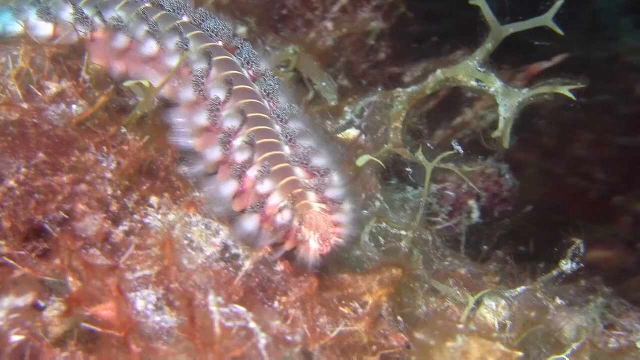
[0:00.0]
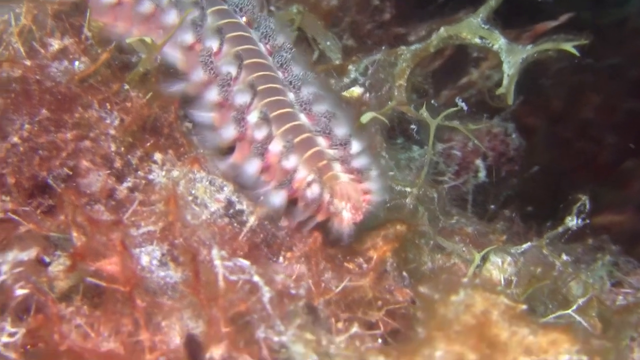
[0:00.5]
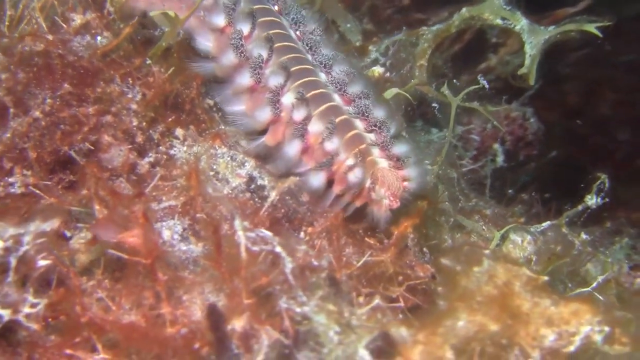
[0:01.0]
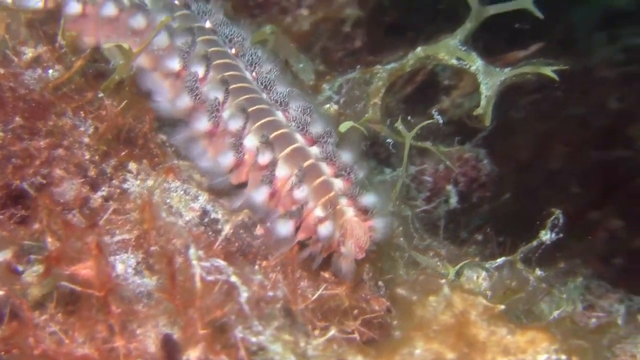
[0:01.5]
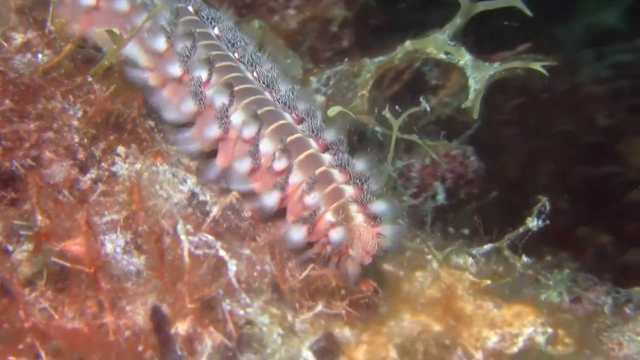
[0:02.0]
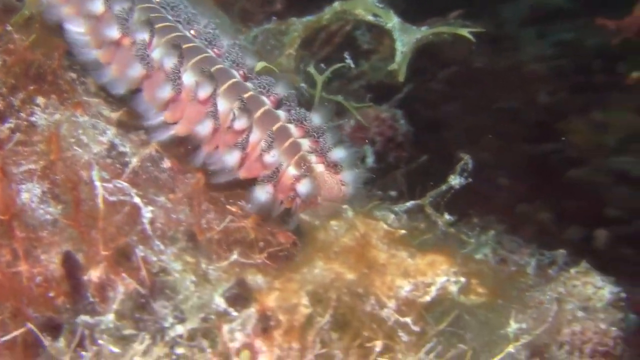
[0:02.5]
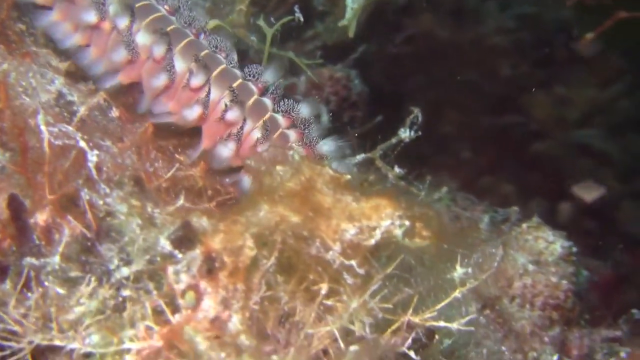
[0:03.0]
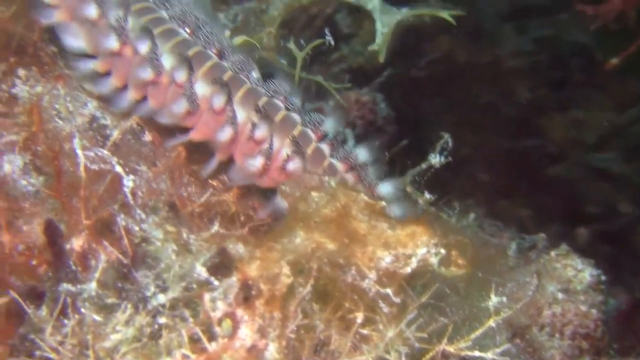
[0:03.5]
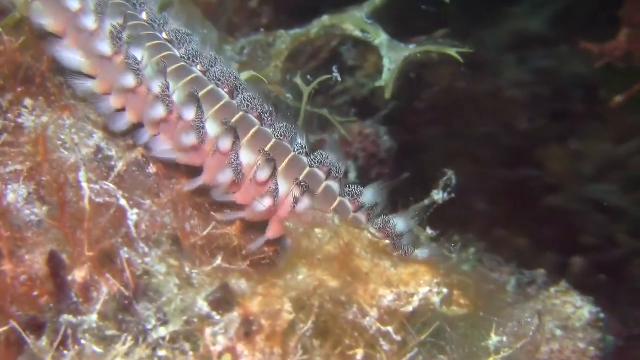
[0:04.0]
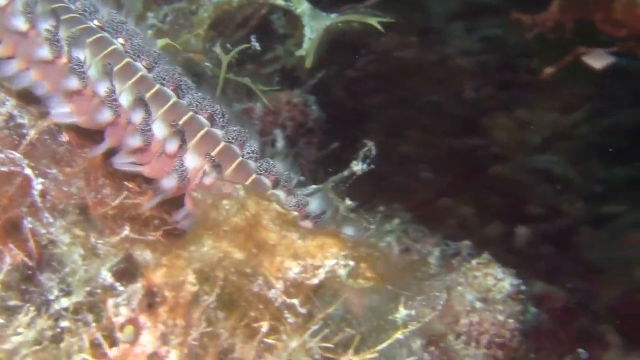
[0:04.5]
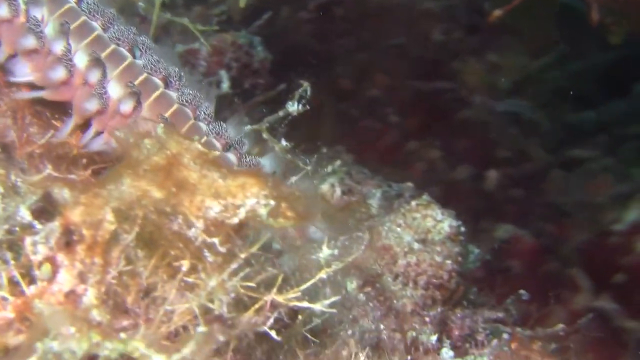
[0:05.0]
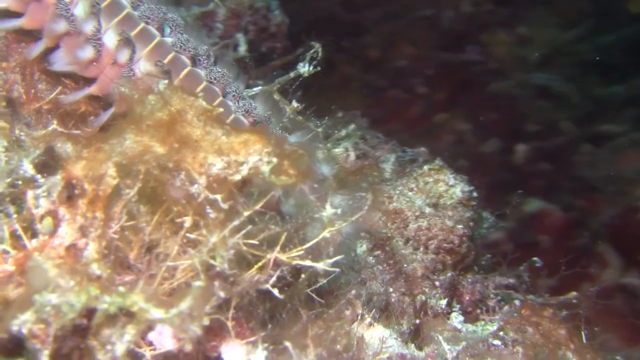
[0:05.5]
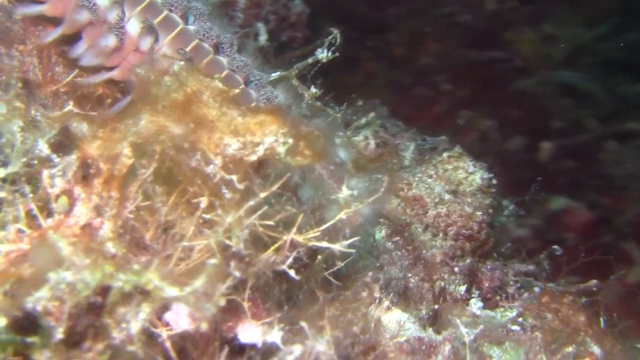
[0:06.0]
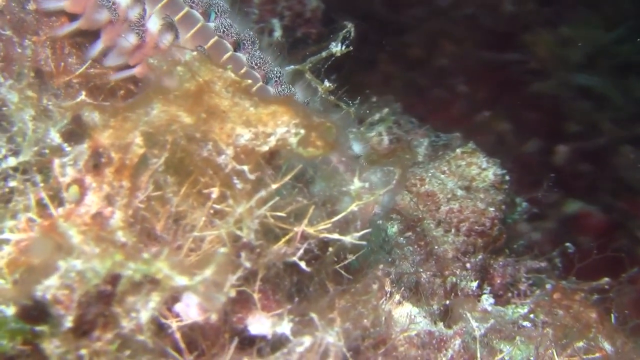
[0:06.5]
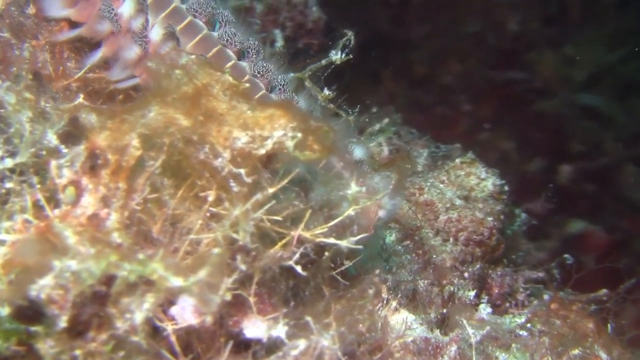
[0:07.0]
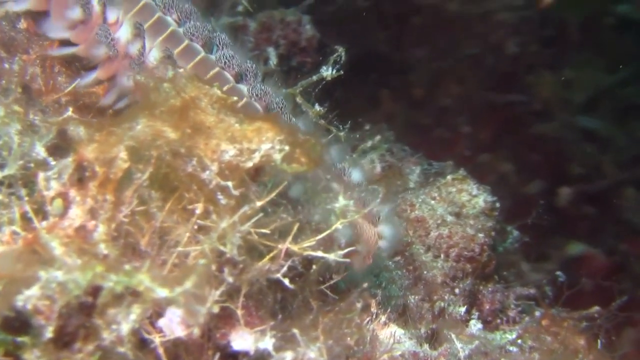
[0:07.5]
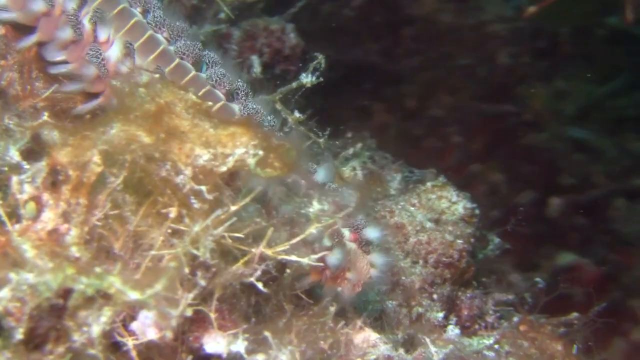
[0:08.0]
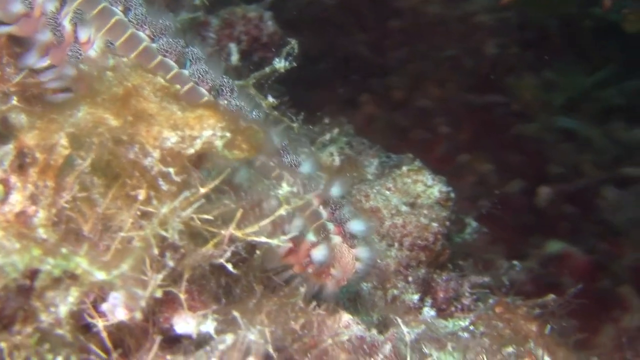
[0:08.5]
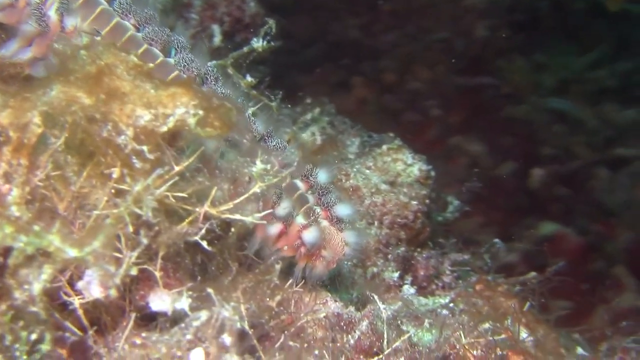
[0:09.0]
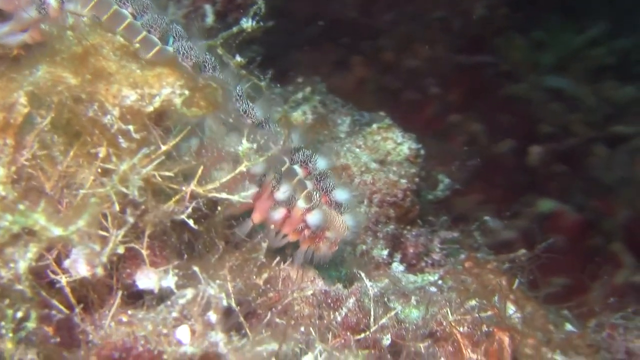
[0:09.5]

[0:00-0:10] The footage appears to be from under the sea. What looks like a giant, almost centipede-like creature crawls underwater toward the bottom right of the screen, on what looks like some kind of yellowish coral. The footage is quite slowed down, and the creature makes its way down the coral. It appears to have pink legs, almost with white tips, and the little legs move as it crawls down the piece of coral. In the background, some coral sticks up, looking quite sharp. A lot of small debris, or possibly little microorganisms, floats in the water in both the foreground and the background.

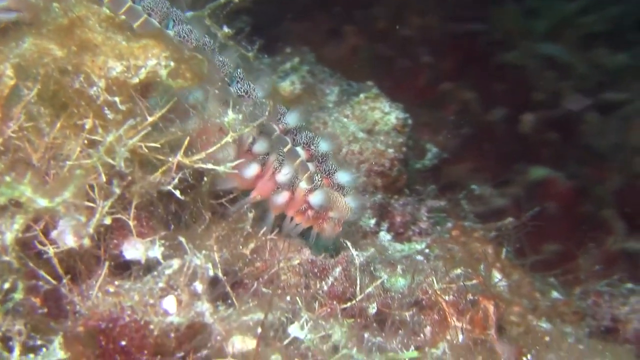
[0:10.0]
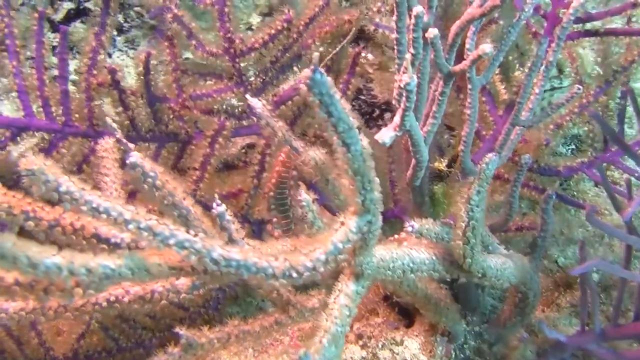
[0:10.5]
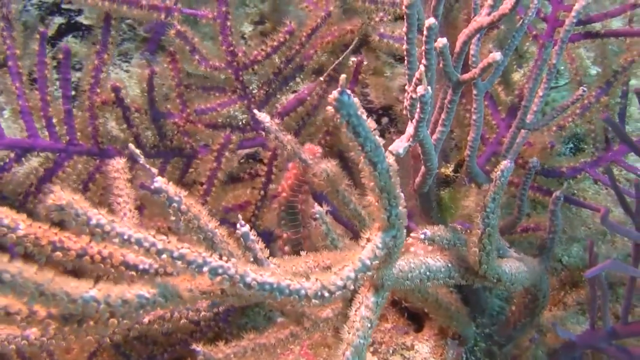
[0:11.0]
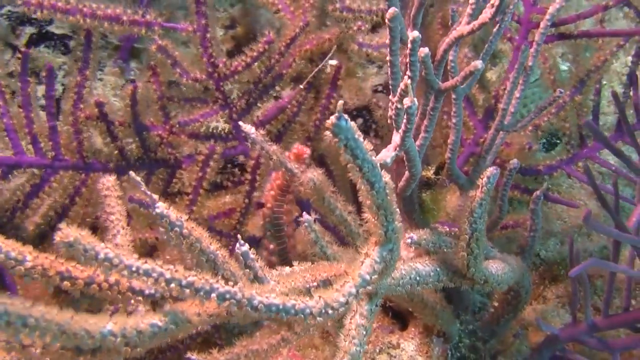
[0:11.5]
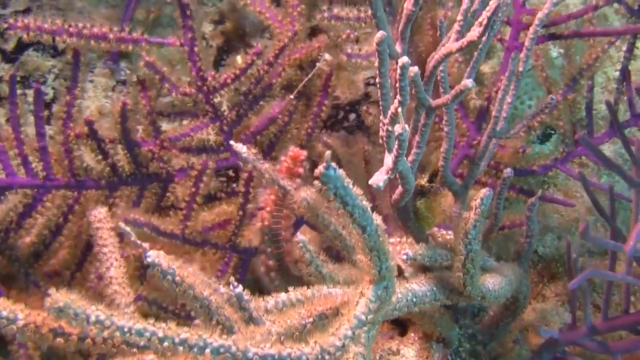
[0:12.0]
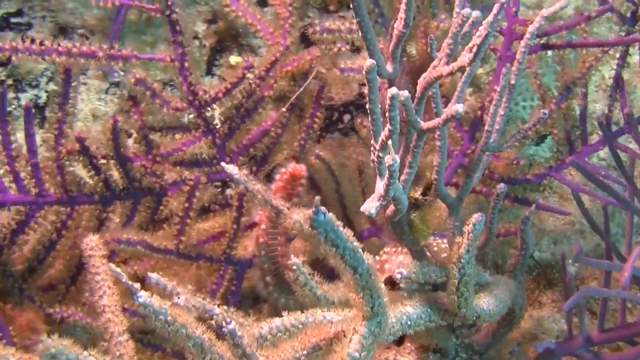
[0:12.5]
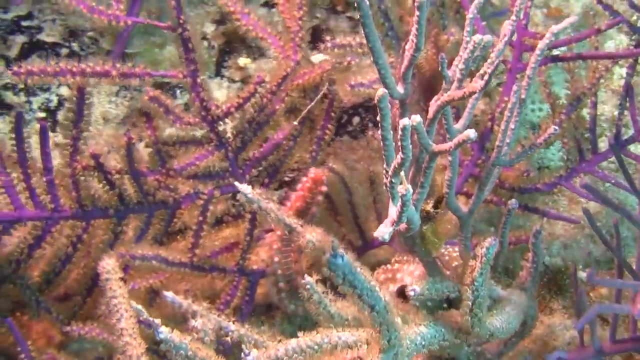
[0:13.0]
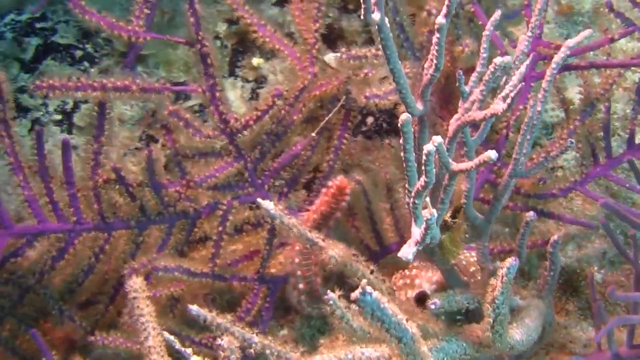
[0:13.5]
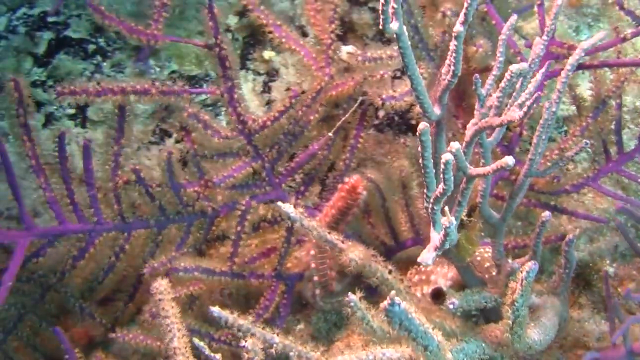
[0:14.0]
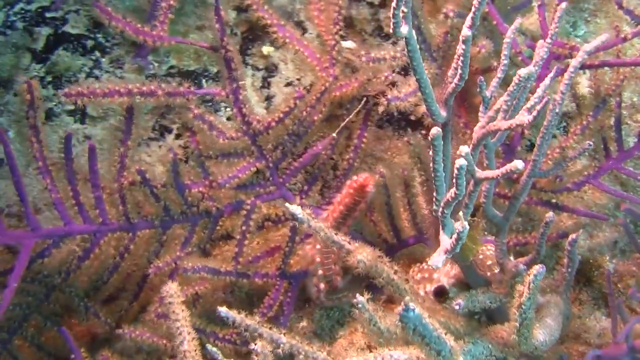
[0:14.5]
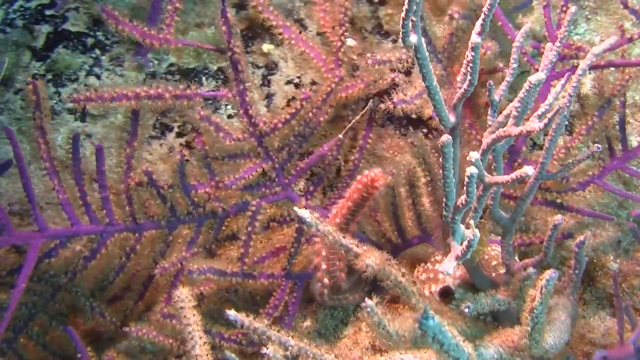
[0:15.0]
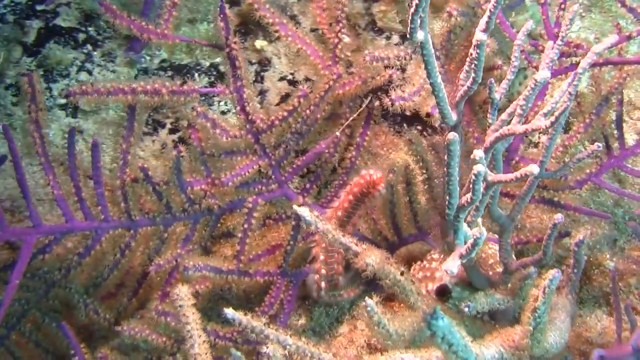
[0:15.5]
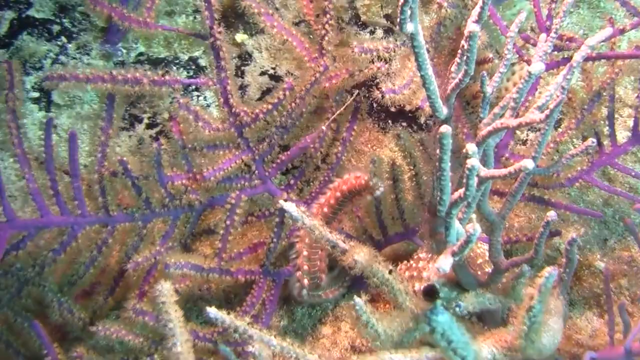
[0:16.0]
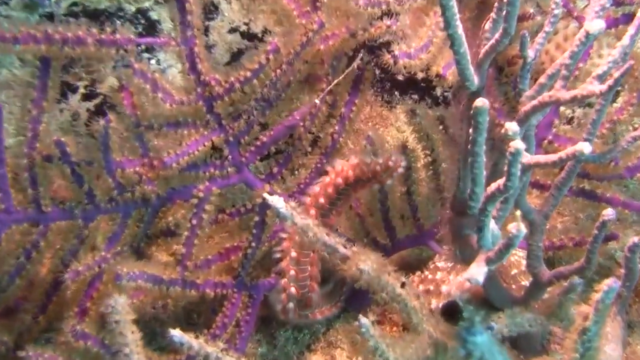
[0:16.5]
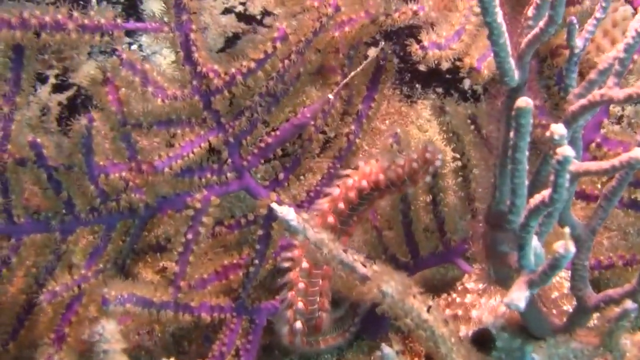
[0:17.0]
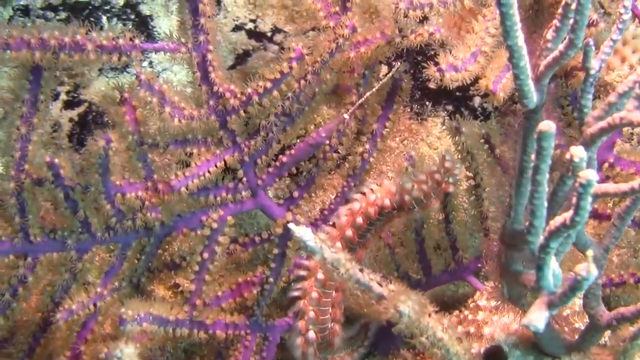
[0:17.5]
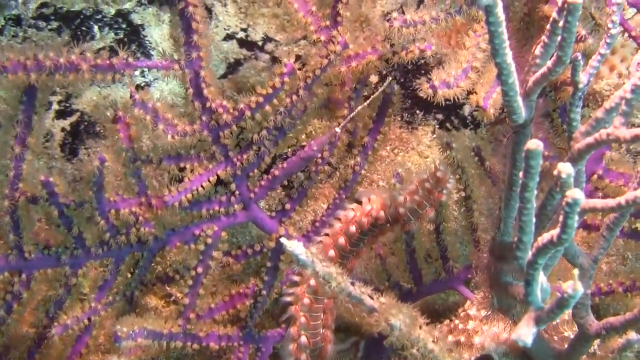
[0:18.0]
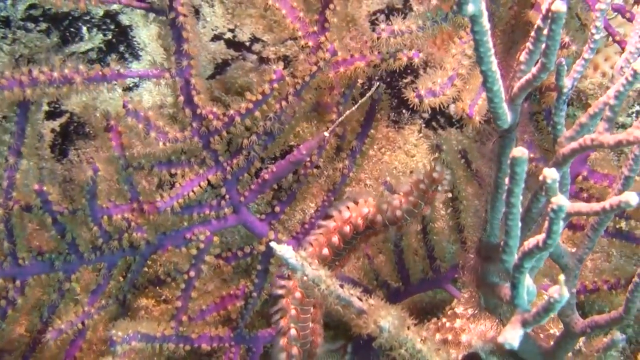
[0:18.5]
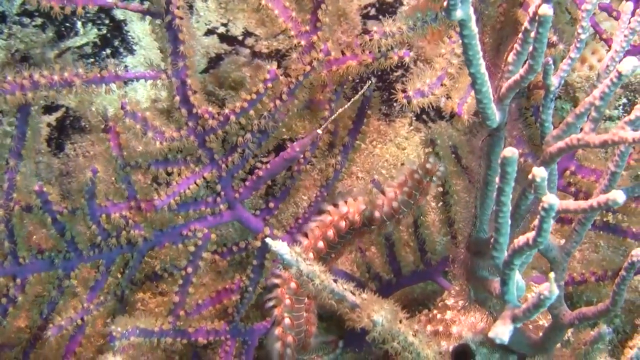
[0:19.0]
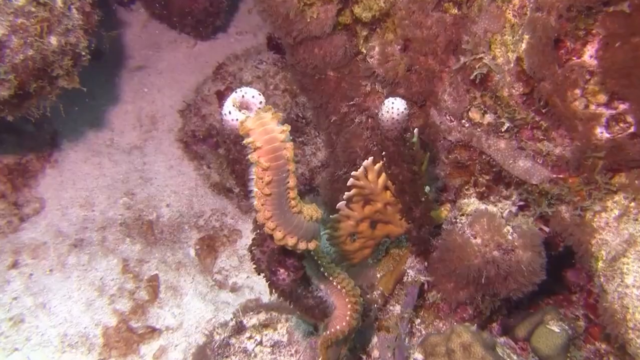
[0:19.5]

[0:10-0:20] The creature continues to walk down the piece of coral, and then the video cuts to other coral: purple coral in the background and gray-looking coral in the foreground, with the camera kind of hovering over it. What looks like the centipede creature is at the very bottom. In an almost overhead shot, the centipede creature crawls in the center of the screen, moving toward the center upper right side. The camera zooms in on it, and it keeps crawling over multiple pieces of coral. The video then cuts to more footage of what looks like the same kind of animal.